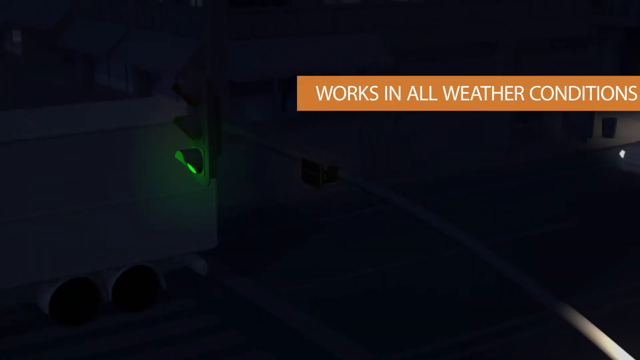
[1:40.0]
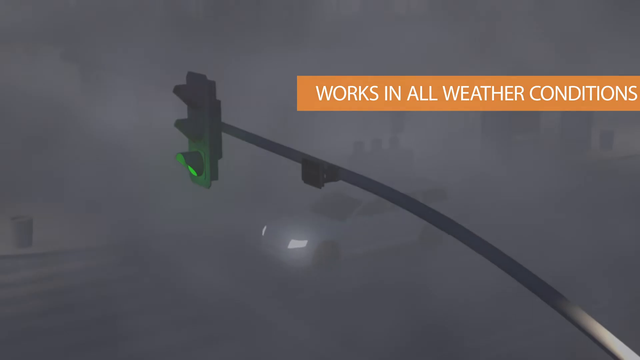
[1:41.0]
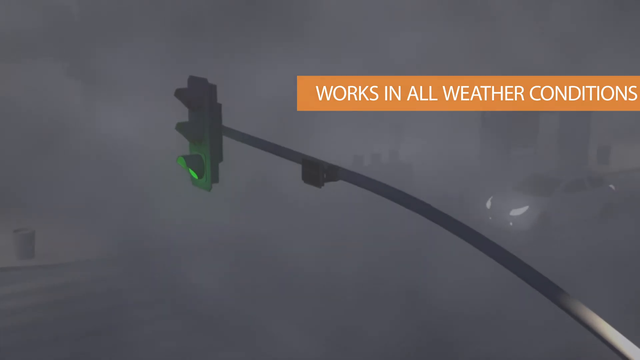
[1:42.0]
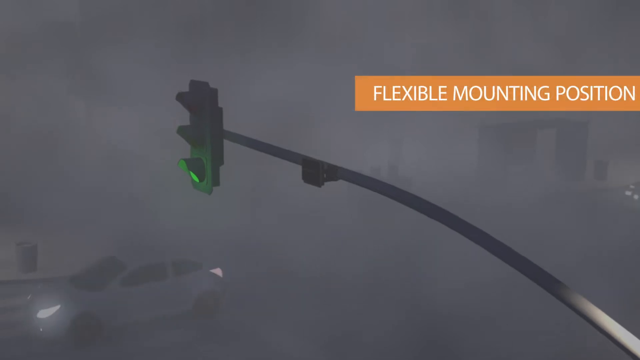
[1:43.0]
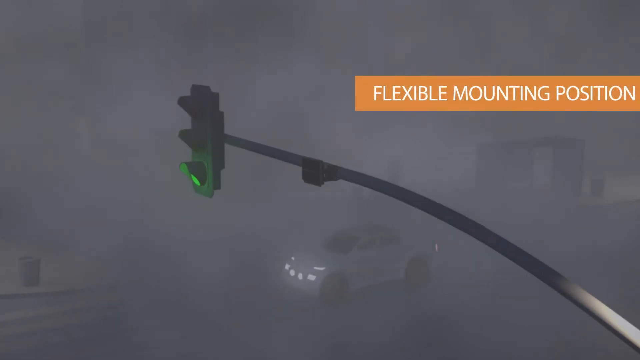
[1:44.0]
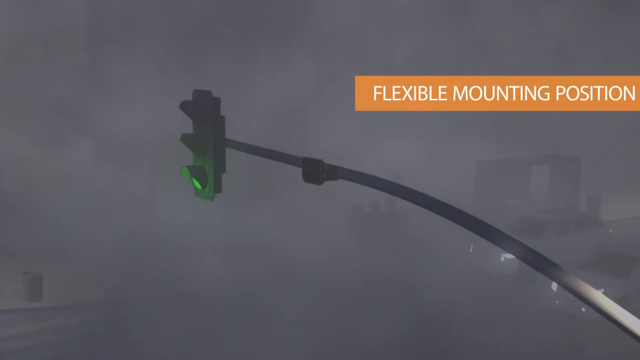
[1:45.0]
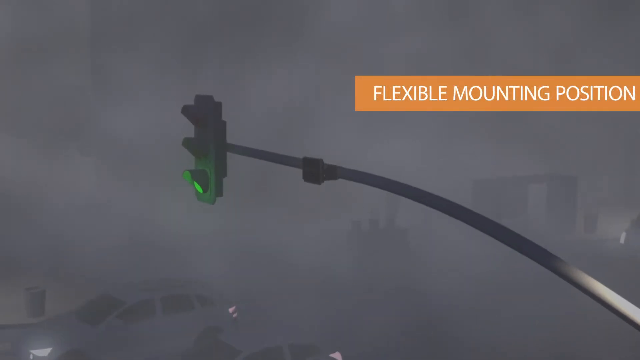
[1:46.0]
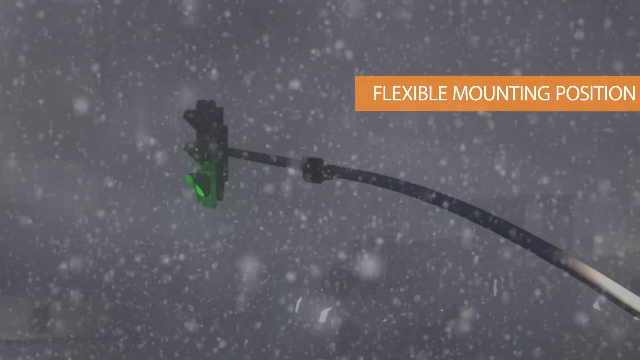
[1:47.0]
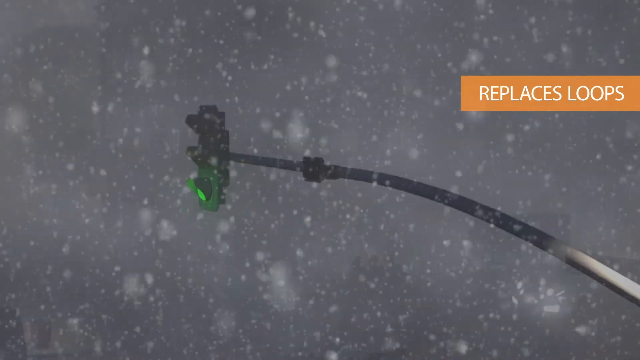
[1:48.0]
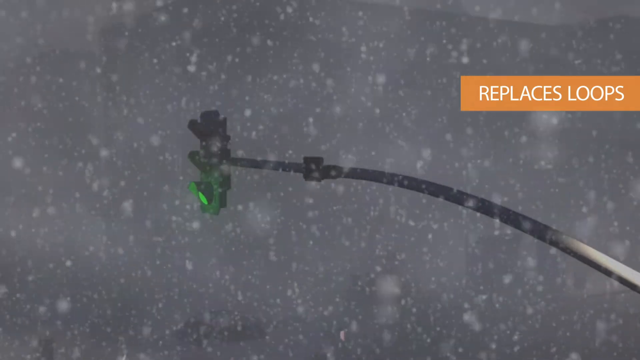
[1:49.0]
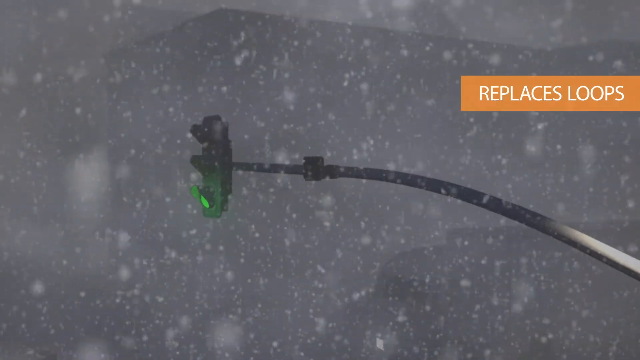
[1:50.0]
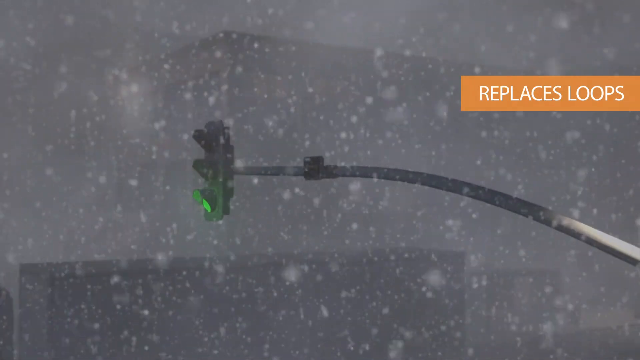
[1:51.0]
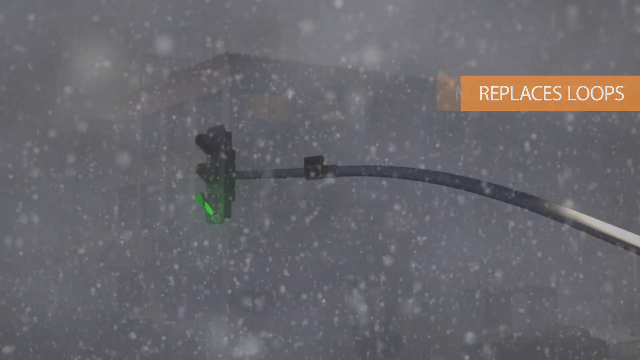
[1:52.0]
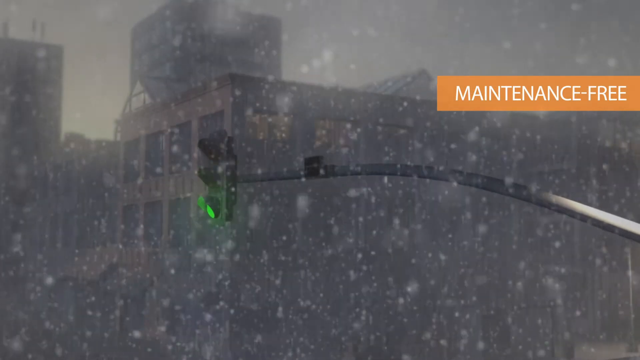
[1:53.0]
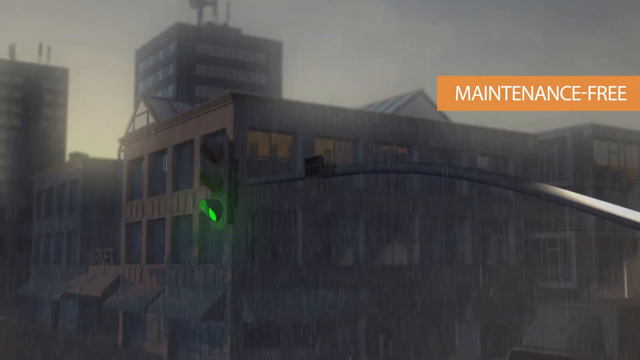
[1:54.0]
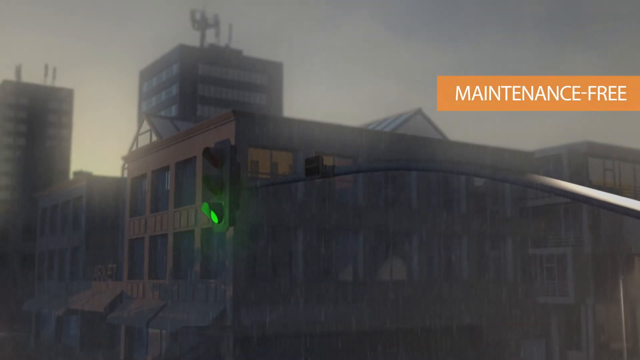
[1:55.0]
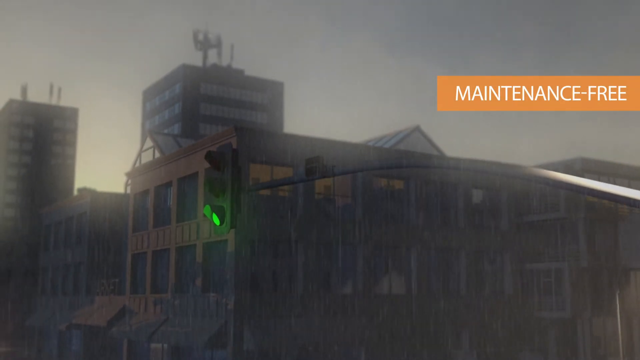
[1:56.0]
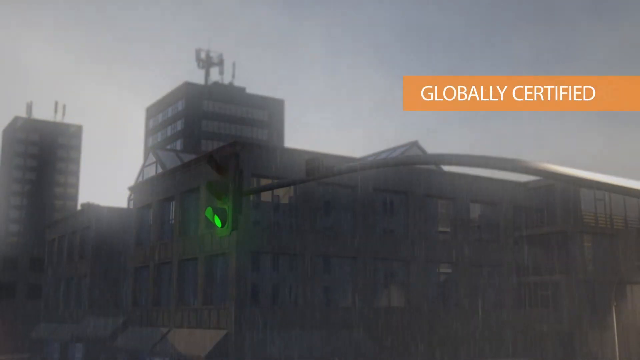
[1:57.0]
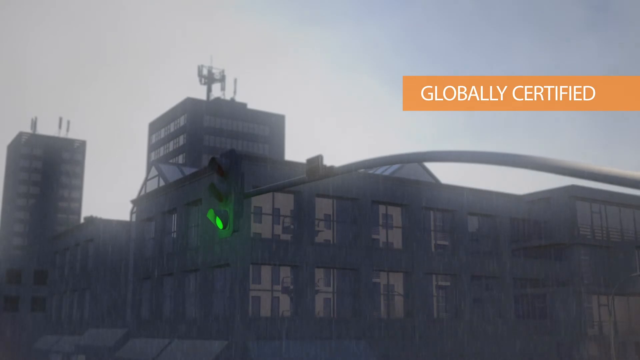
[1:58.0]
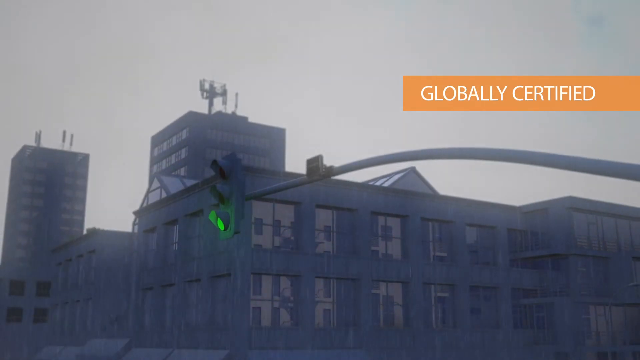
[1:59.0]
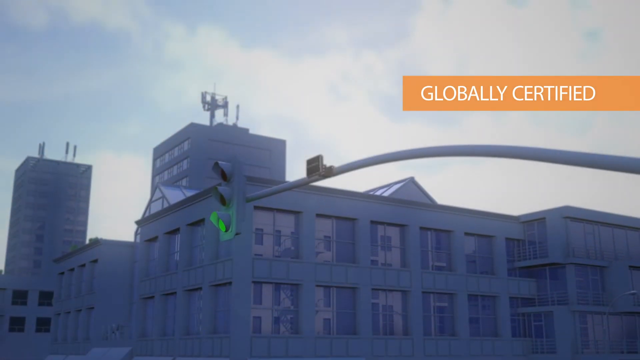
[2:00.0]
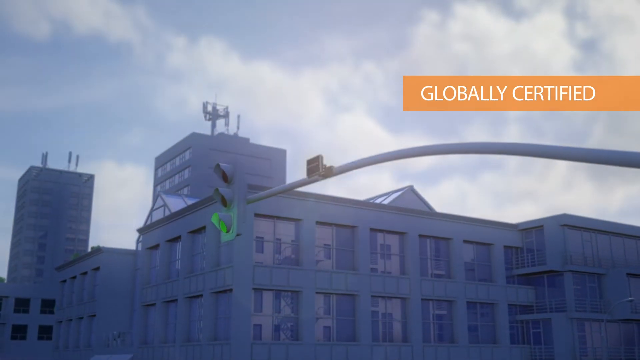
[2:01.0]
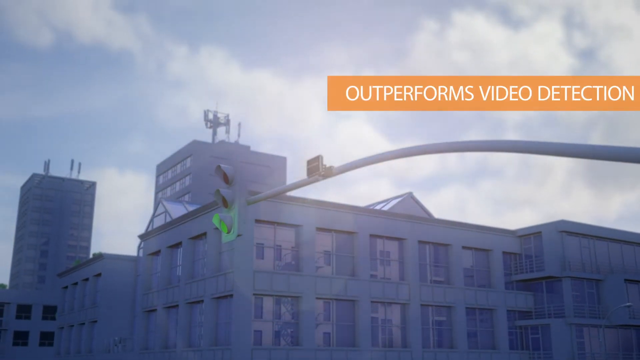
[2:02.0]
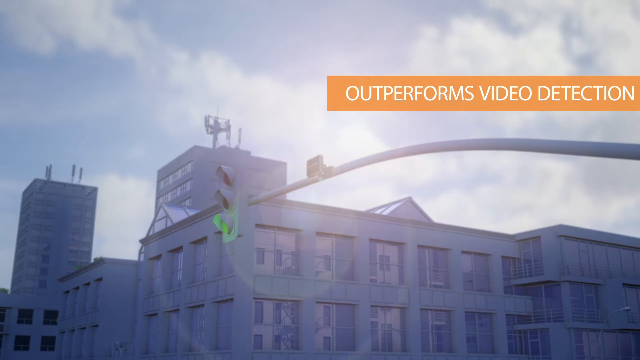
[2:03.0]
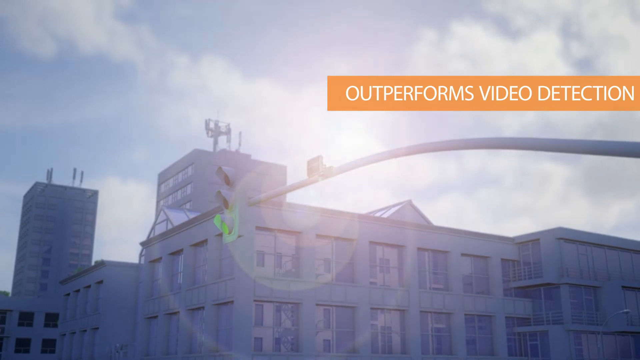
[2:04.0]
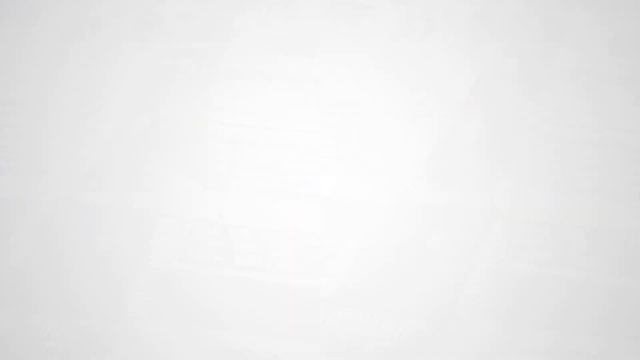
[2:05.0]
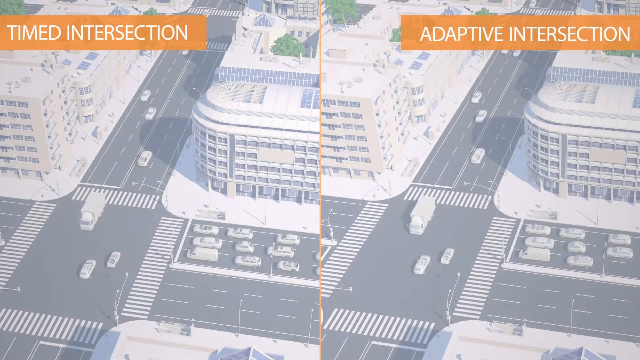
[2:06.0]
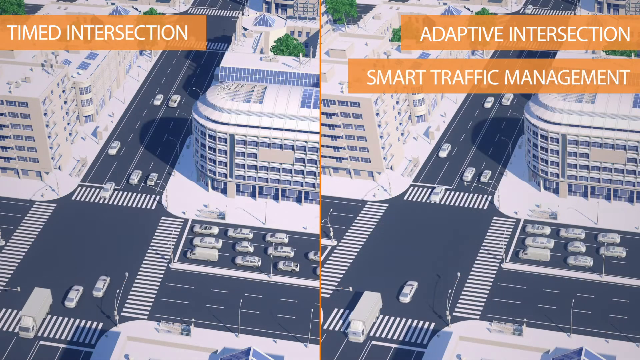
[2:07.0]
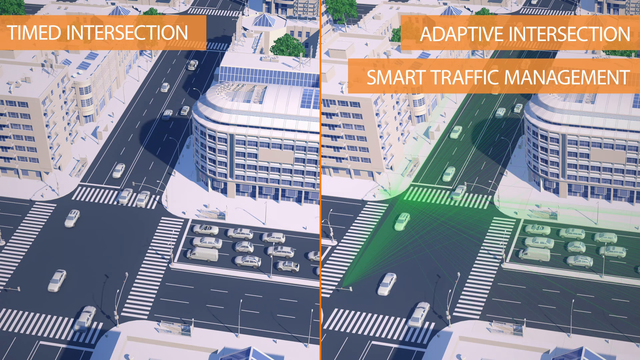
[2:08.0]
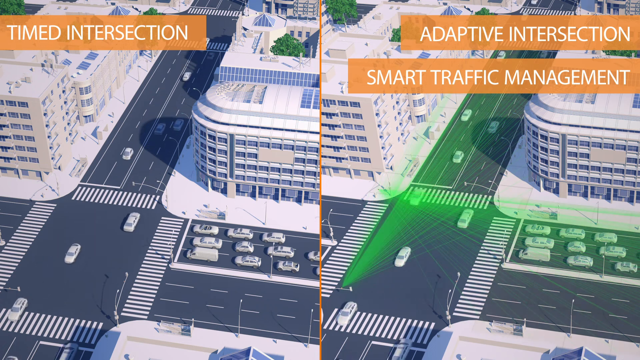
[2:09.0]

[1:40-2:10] Still at night, text reads "works in all weather conditions" as the scene changes from somewhat dark to very foggy, with the sensors still picking up traffic. Text mentions "flexible mounting positions," and the sensor is shown still working in rain and snow. Further text reads "replace loops," "Maintenance free," "Globally certified," "Outperforms video detection" and "adaptive intersections."